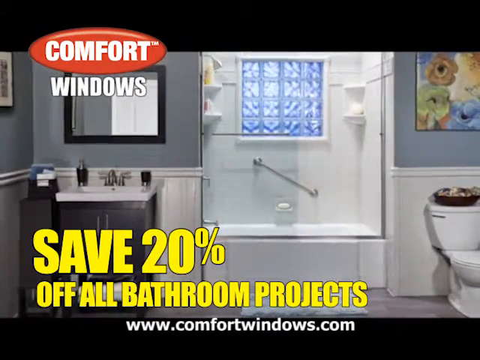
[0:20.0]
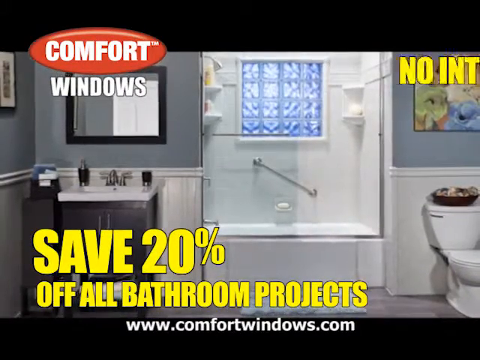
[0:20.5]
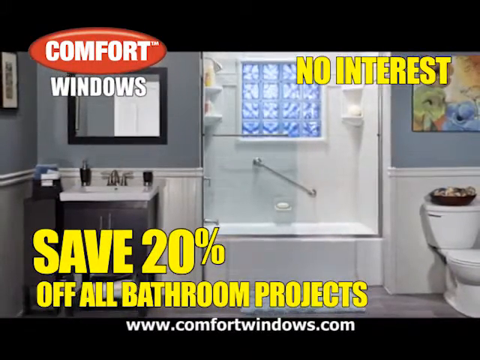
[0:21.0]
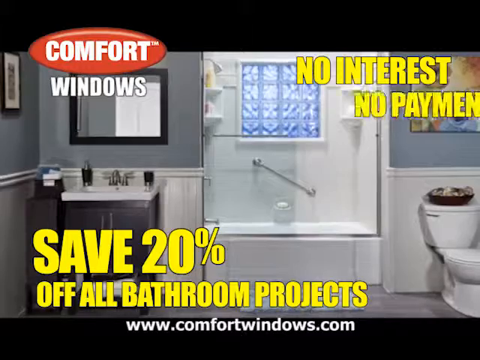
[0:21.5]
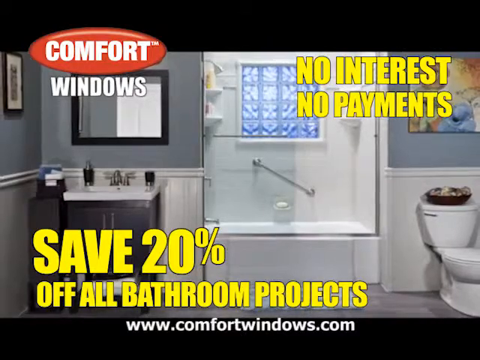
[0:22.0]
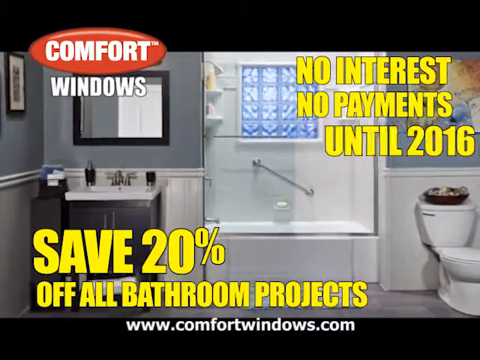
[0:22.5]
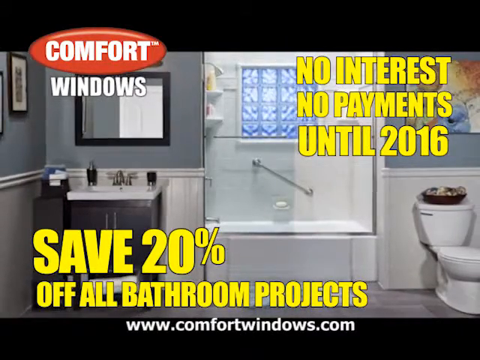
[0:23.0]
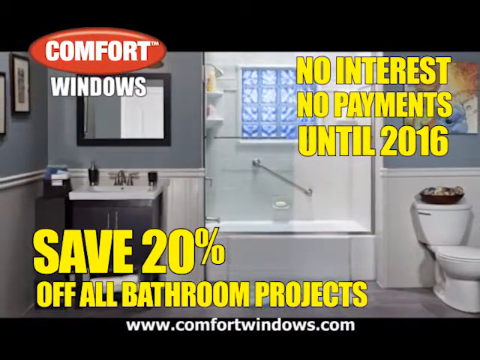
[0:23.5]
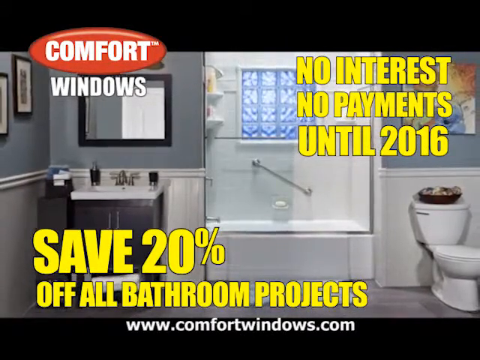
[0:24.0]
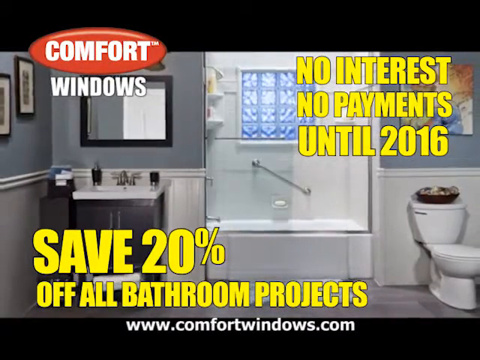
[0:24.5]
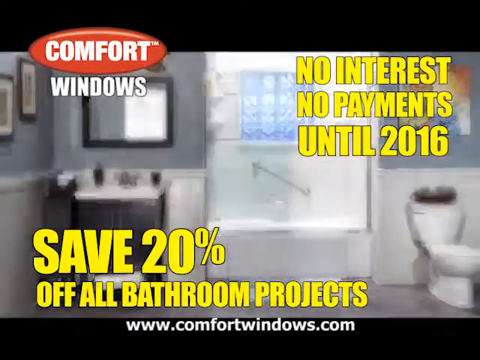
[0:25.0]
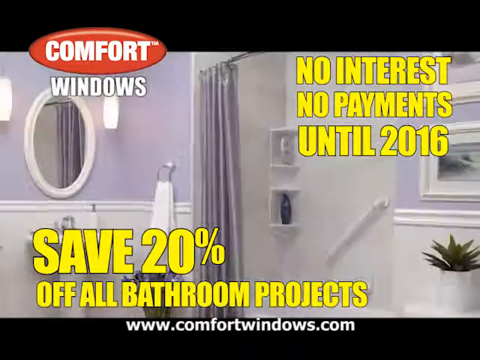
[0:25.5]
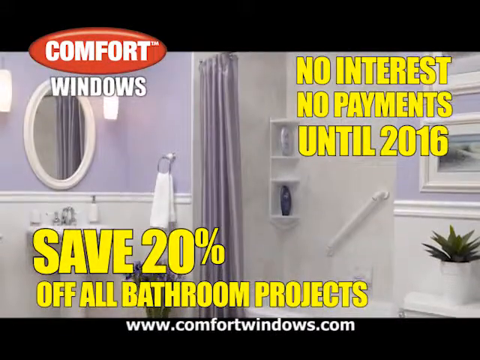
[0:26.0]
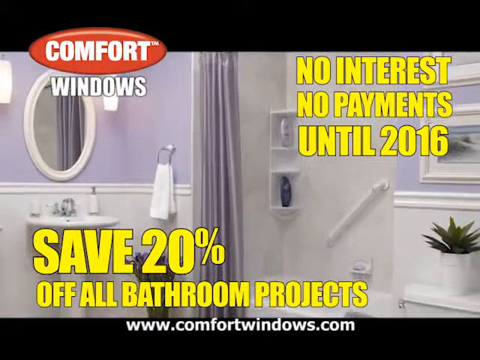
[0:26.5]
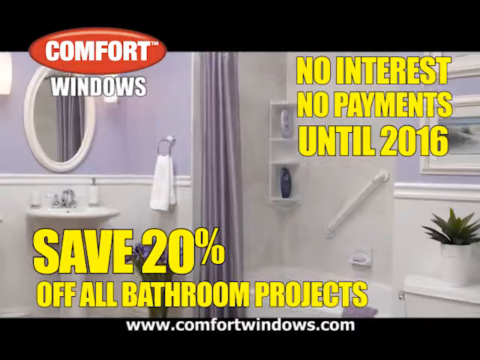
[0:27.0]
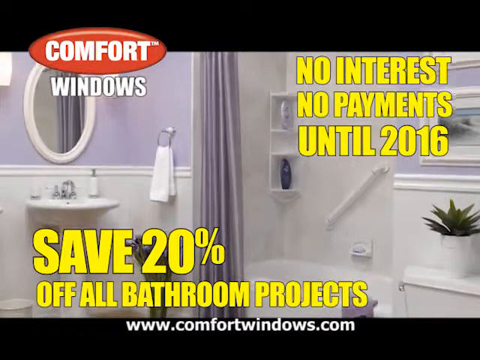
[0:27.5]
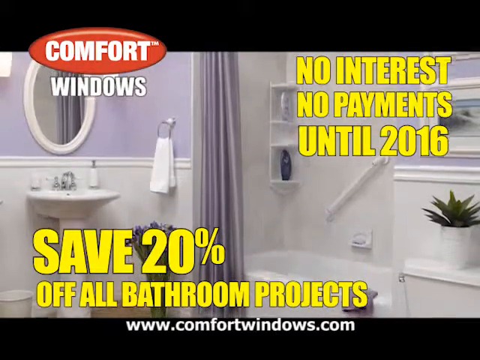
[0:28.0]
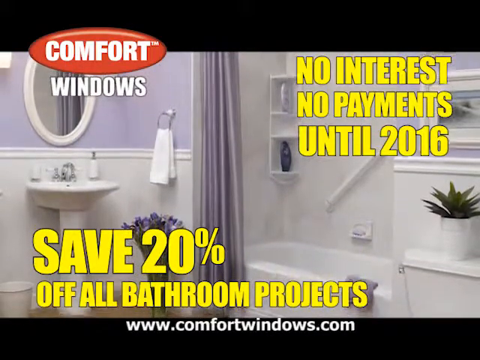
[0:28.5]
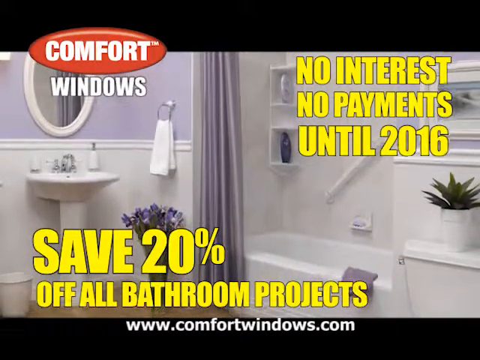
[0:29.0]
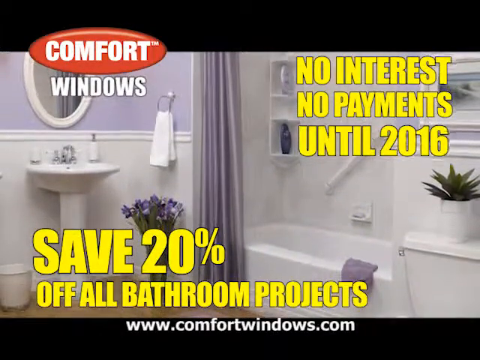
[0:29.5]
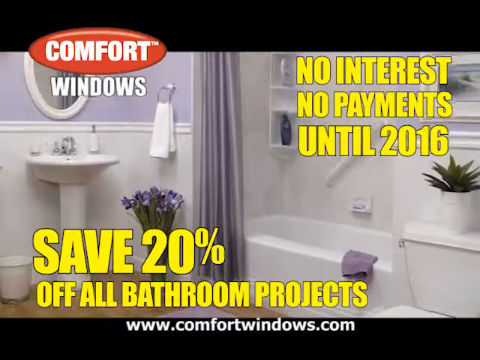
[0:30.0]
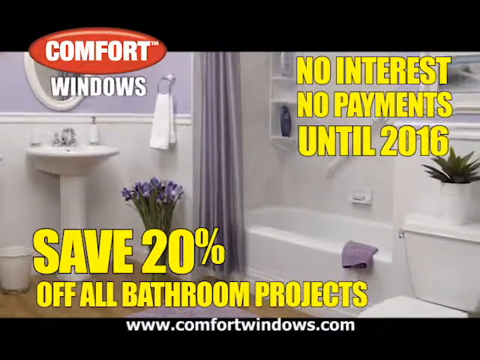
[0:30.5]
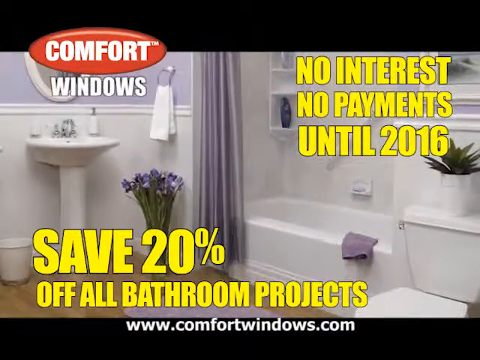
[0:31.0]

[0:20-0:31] This promotion for a company called Comfort Windows has a photograph of a nicely renovated bathroom with a glass shower door in the background. Text at the bottom of the screen reads "Save 20% off all bathroom projects." The words "No interest, no payments until 2016" then appear to scroll in from the right side of the screen. The bathroom images in the background change, but they are always bright, clean and newly renovated. The Comfort Windows logo is in the upper left-hand corner and the web address "www.comfortwindows.com" is at the bottom of the screen.